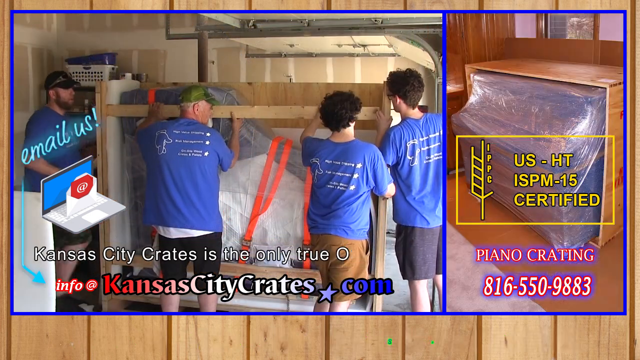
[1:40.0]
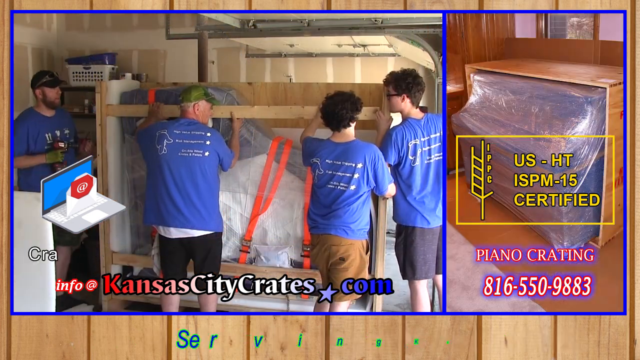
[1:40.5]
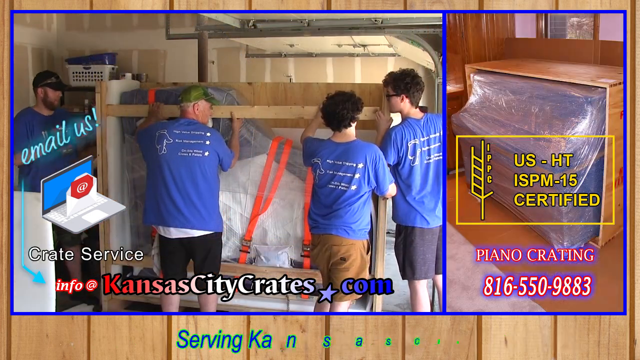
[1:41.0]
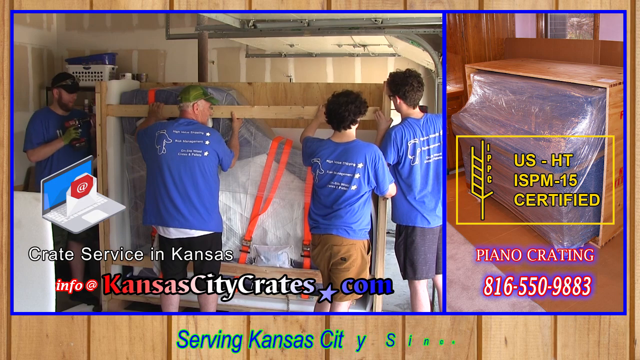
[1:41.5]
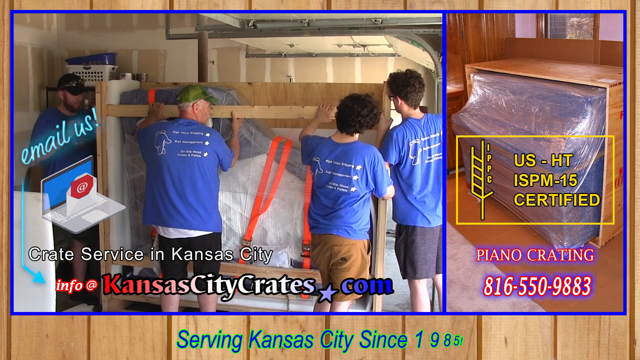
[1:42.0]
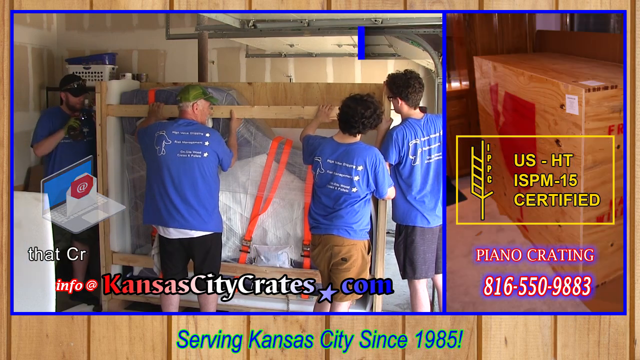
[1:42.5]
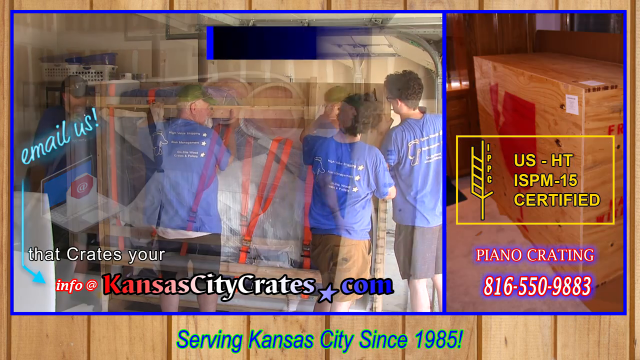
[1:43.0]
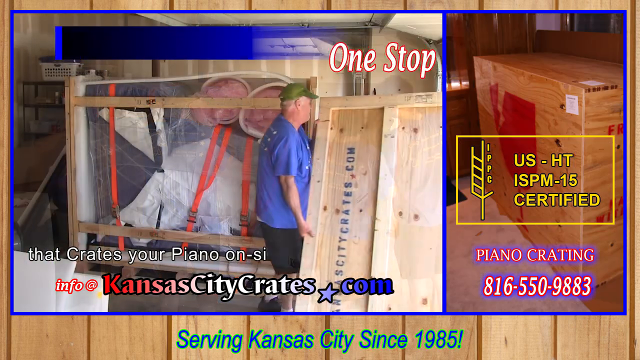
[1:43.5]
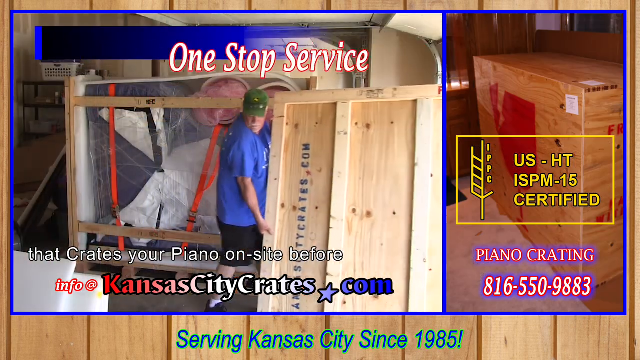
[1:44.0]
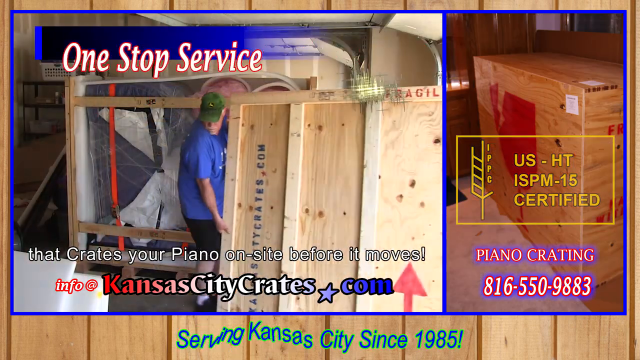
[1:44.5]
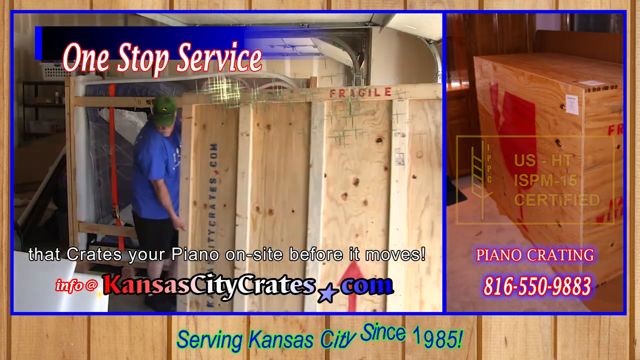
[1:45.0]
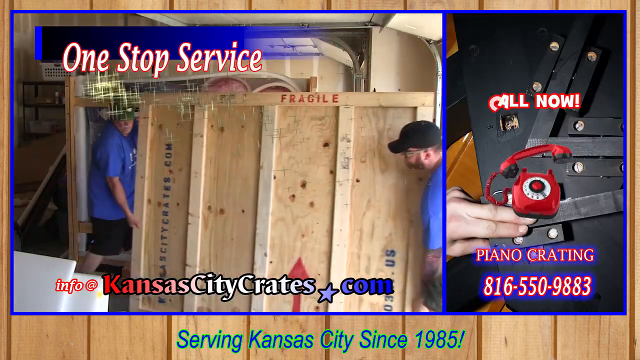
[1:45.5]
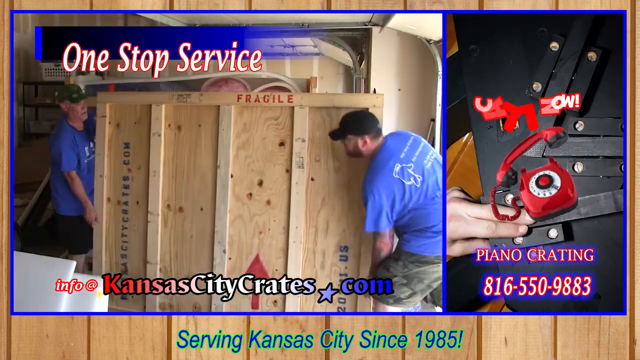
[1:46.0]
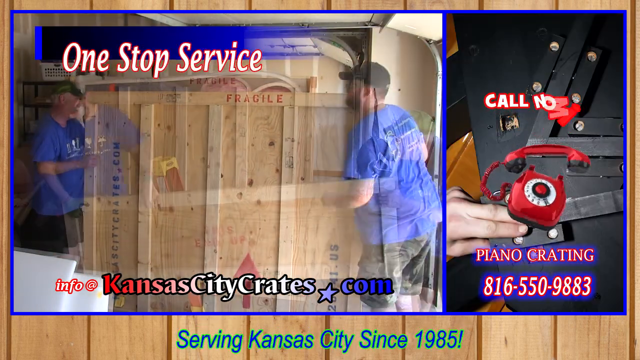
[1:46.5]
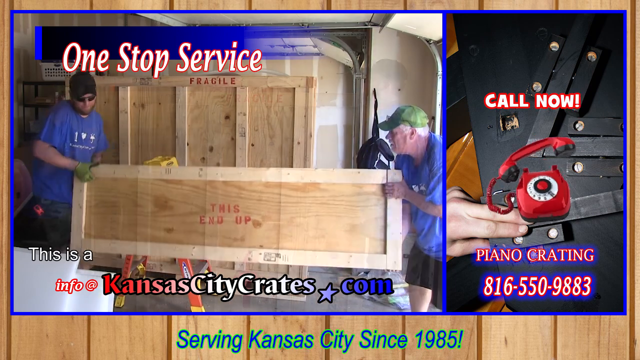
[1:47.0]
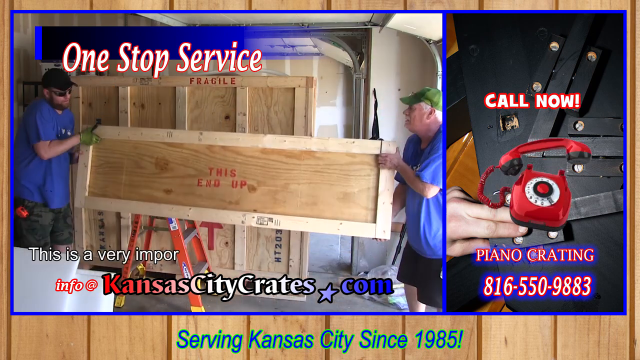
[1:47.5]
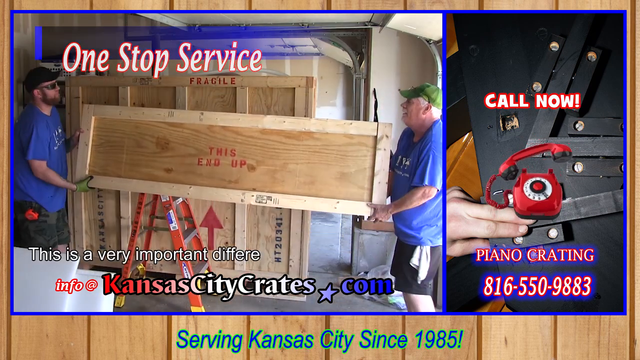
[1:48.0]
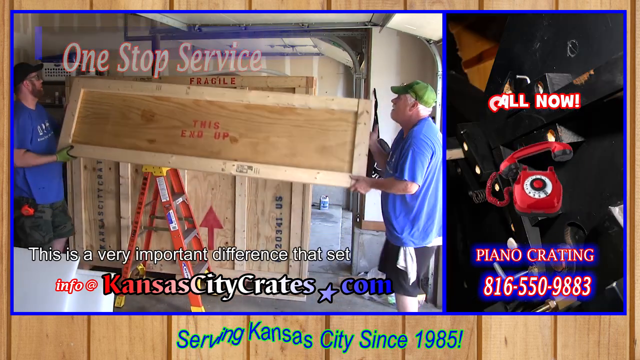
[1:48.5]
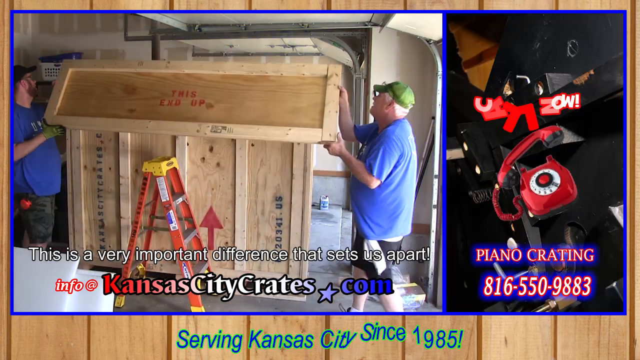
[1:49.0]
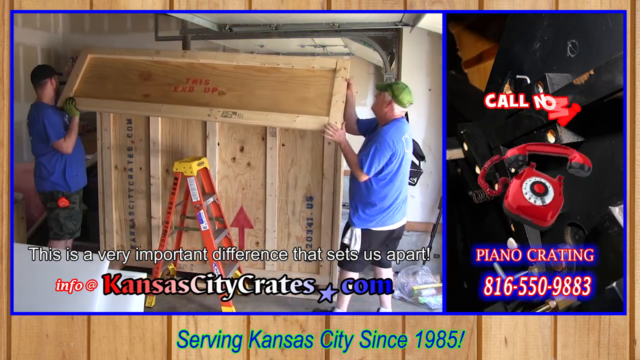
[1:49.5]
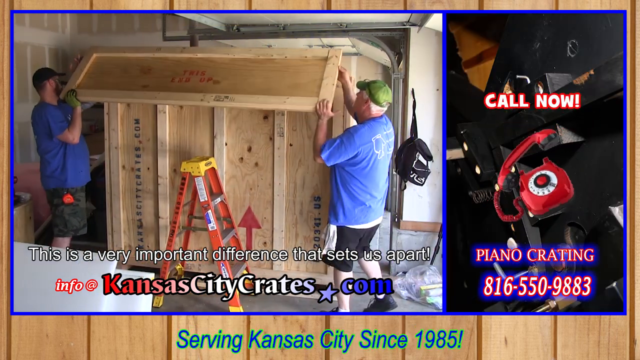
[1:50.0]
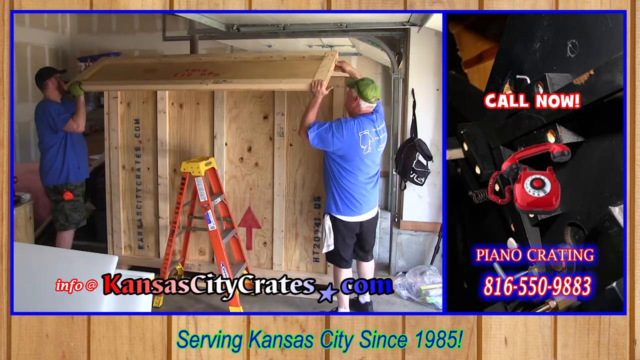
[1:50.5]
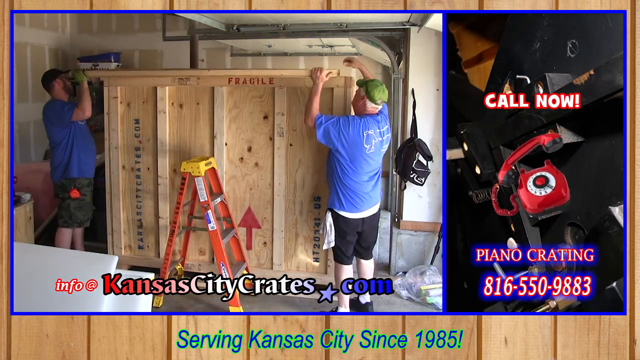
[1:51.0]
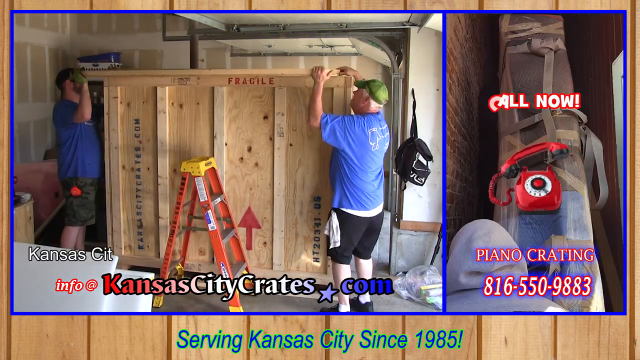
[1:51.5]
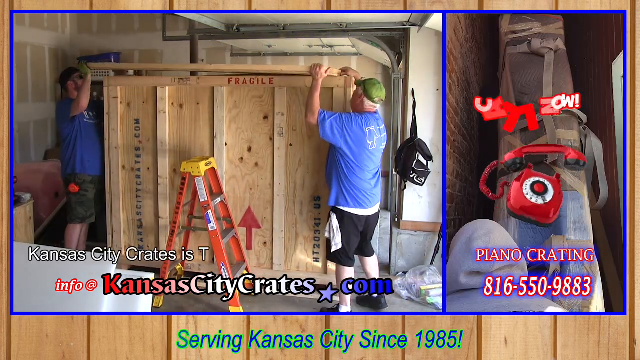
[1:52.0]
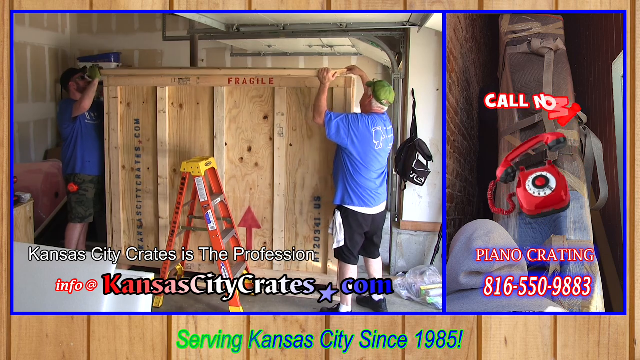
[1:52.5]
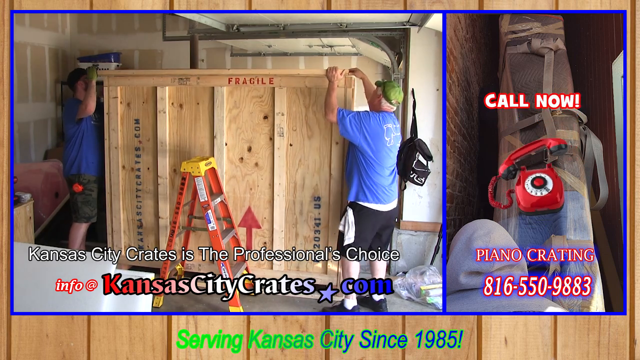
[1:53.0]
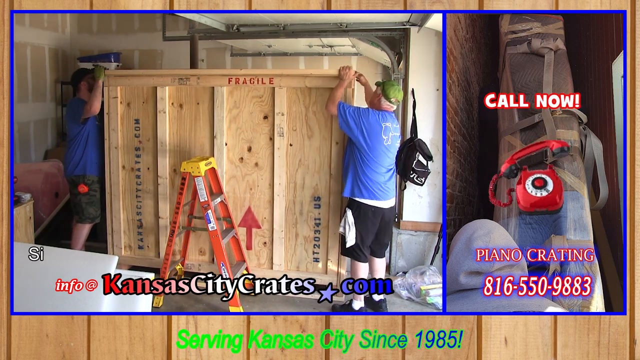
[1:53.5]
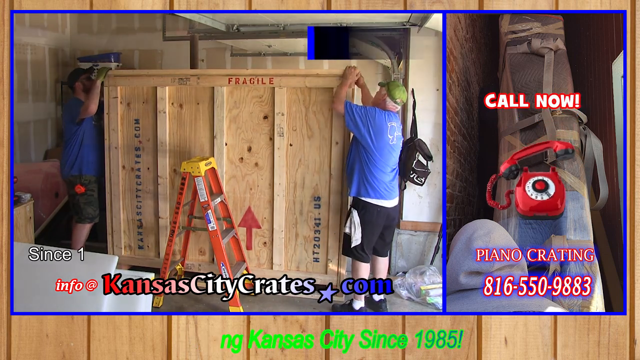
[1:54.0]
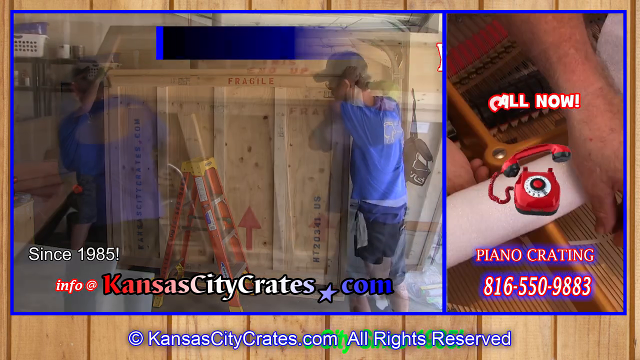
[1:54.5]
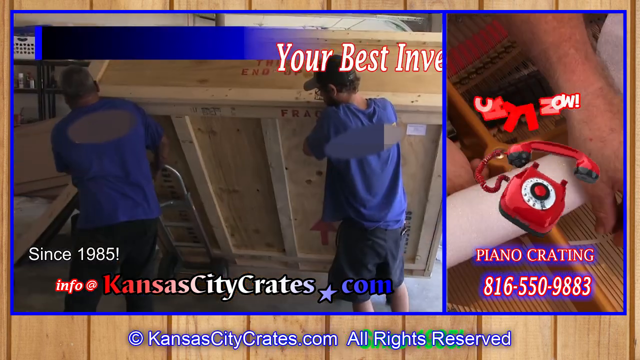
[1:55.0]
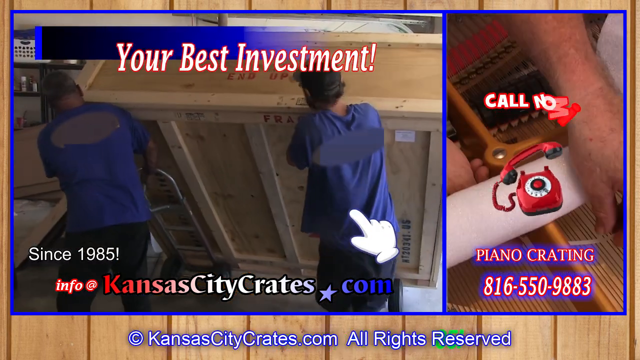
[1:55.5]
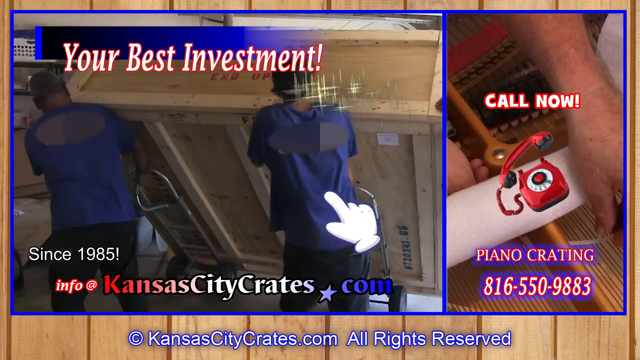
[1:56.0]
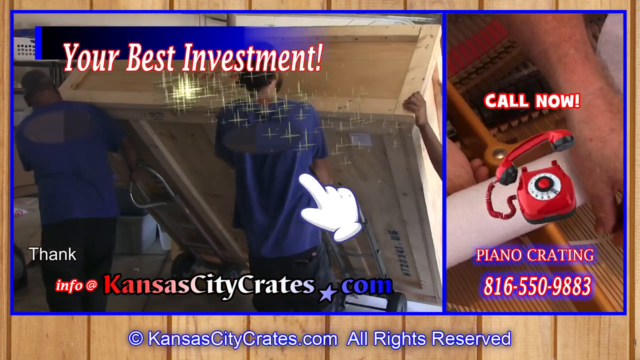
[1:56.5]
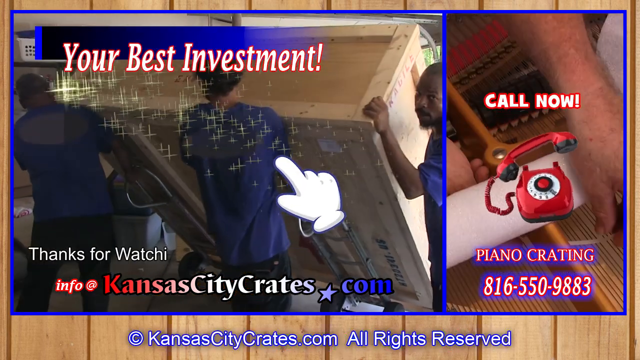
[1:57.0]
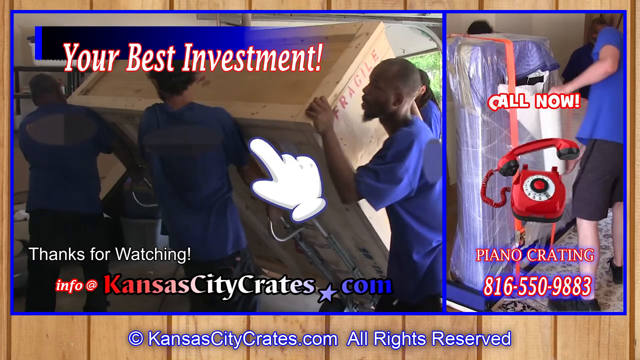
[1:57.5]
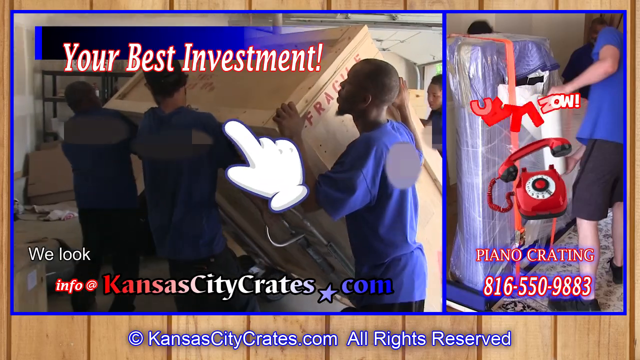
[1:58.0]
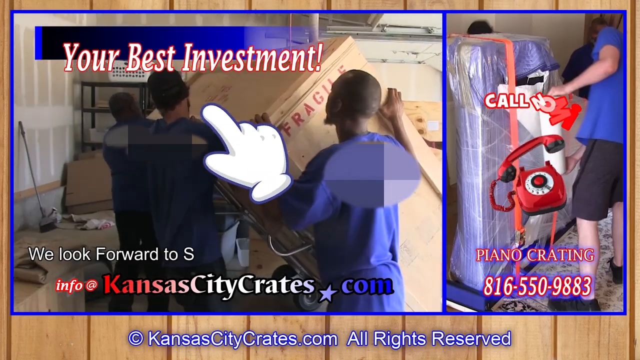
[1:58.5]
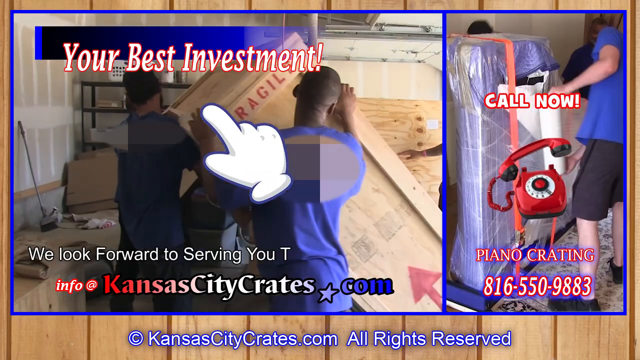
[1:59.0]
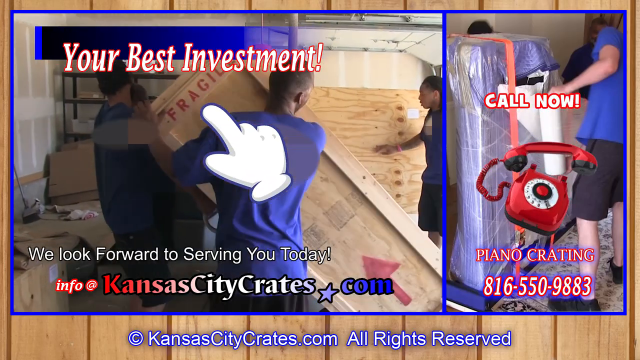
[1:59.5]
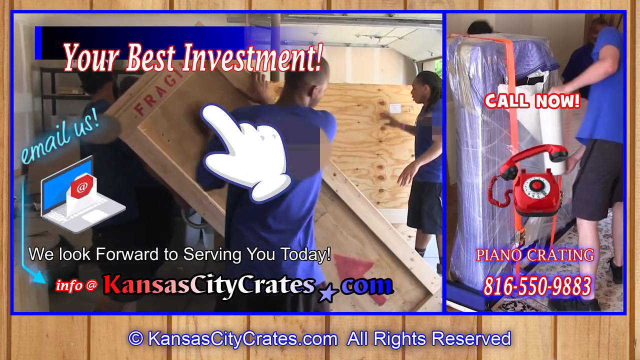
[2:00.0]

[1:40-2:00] Four men in blue shirts secure the piano inside the crate. The man on the left uses a drill to drive screws into the wooden crate. Text reads "Kansas City Crates is the only crate service in Kansas City that crates your piano on site before it moves." Next, two men carry a large wooden piece in front of the crate, with "fragile" written on top of the front piece they hold. They also put a wooden plank reading "this end up" on top of the crate. Text at the top reads "one stop service," and to the right is a red phone number reading "call now, piano crating 816-550-9883." An orange ladder is in front of the crate as the men put the top panel on. Finally, four men use dollies to wheel the crated piano.